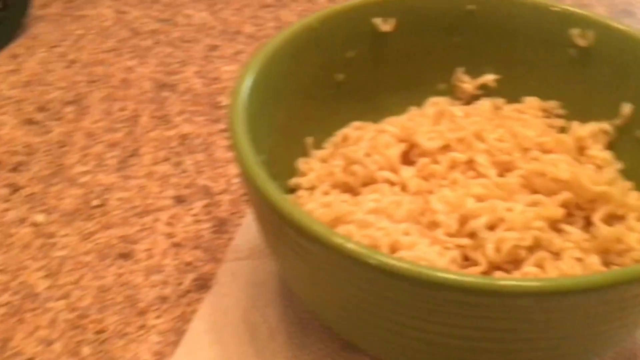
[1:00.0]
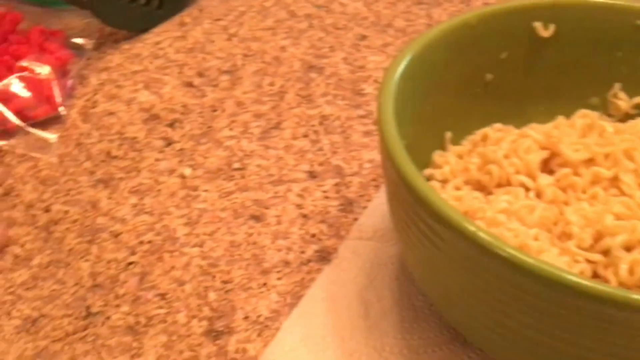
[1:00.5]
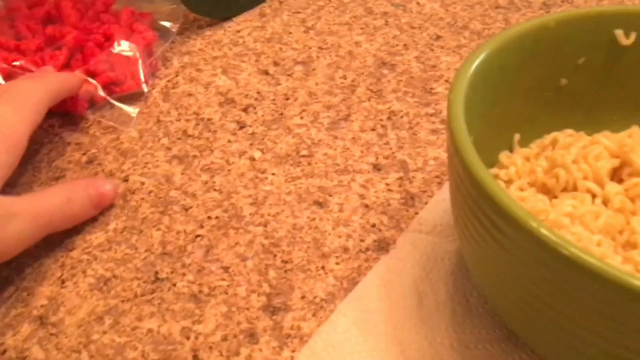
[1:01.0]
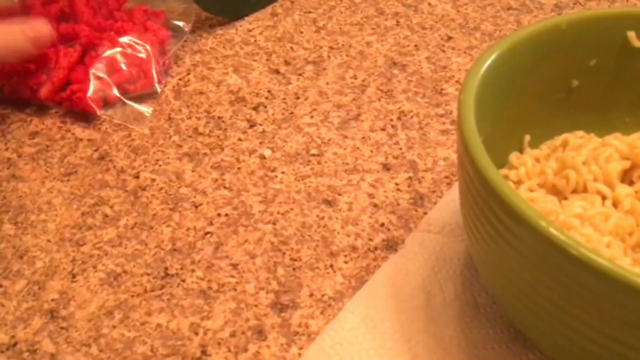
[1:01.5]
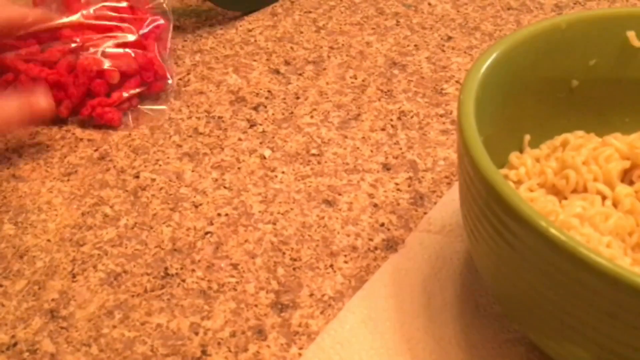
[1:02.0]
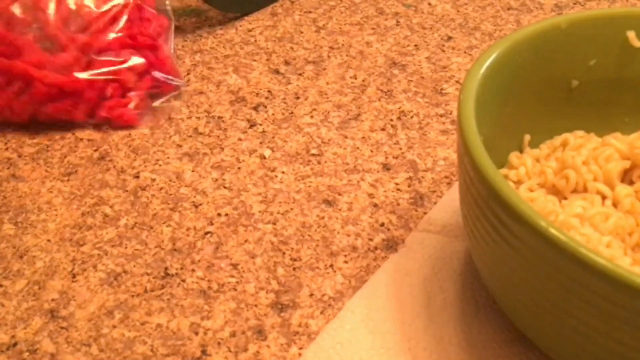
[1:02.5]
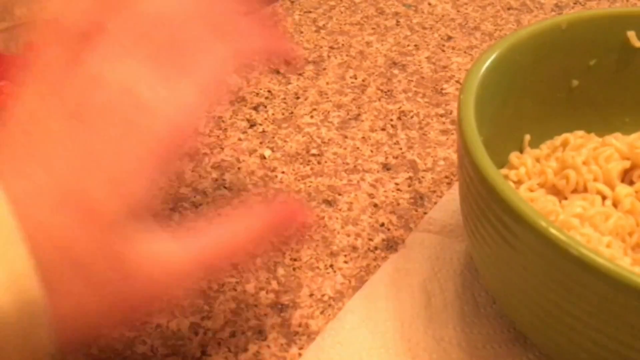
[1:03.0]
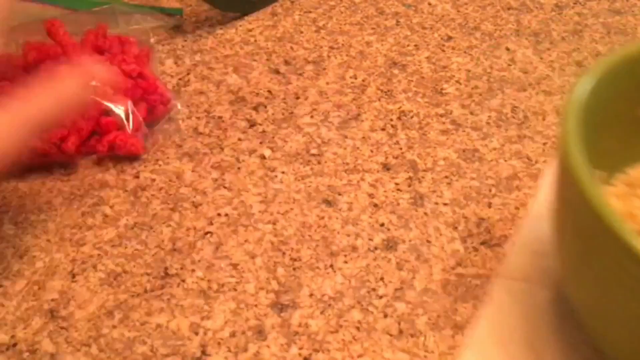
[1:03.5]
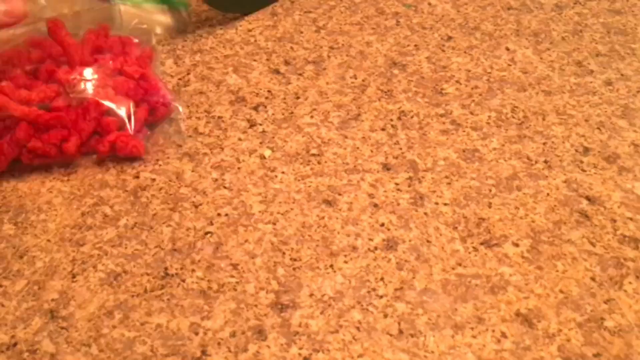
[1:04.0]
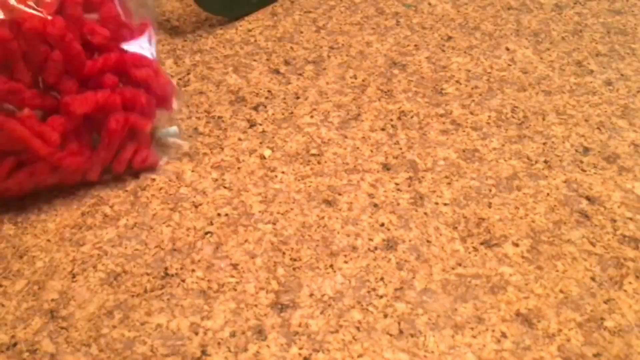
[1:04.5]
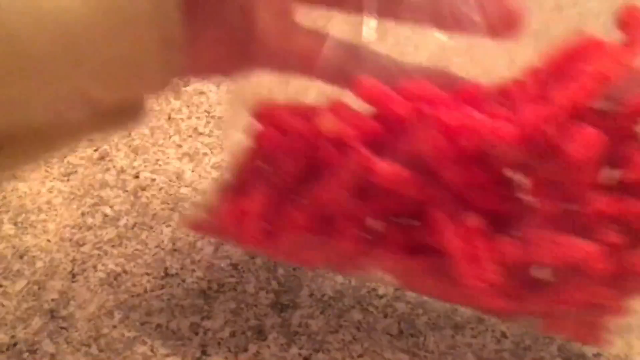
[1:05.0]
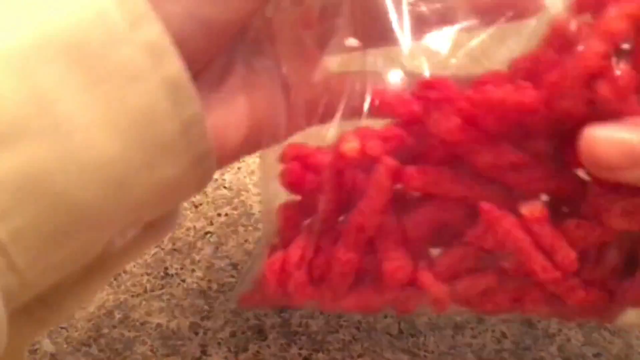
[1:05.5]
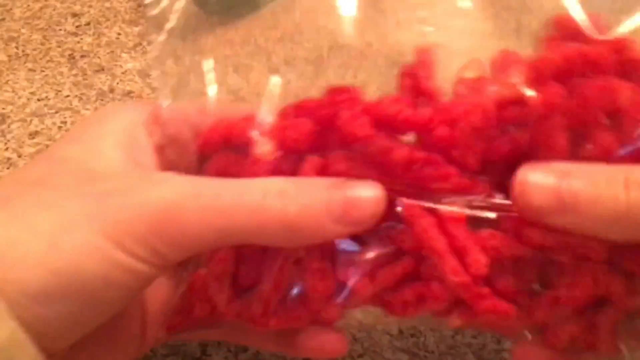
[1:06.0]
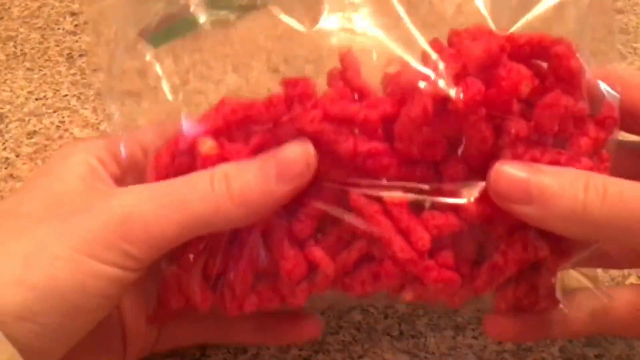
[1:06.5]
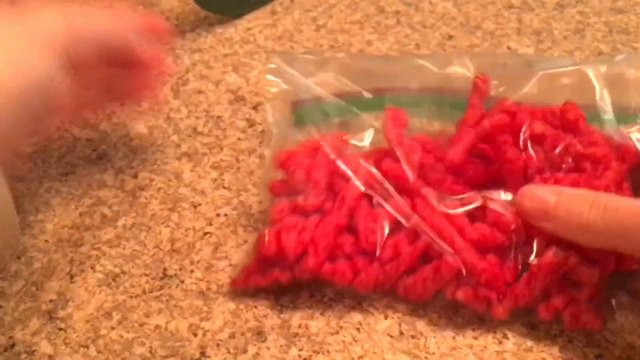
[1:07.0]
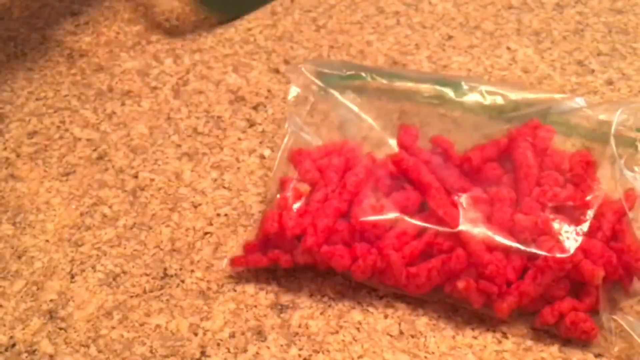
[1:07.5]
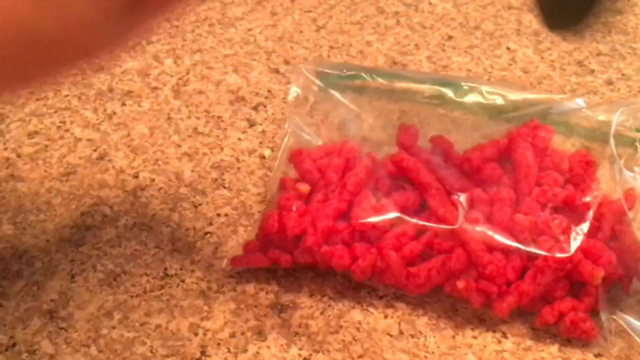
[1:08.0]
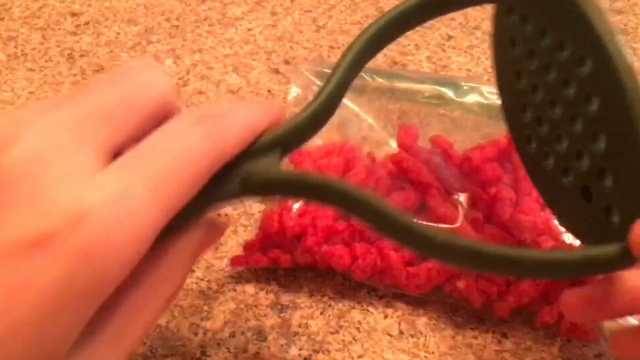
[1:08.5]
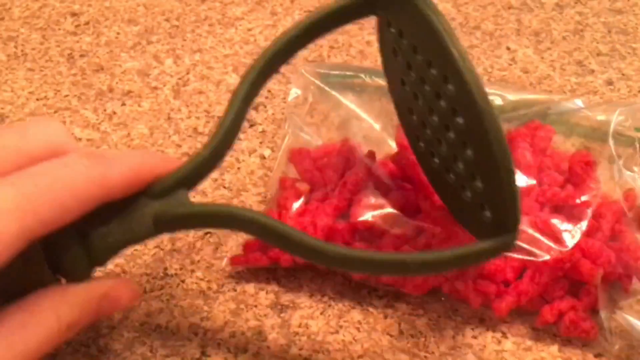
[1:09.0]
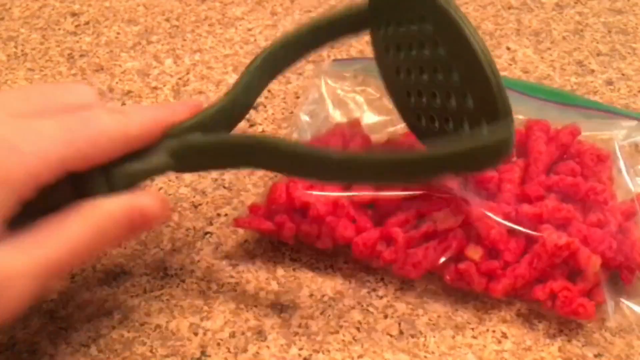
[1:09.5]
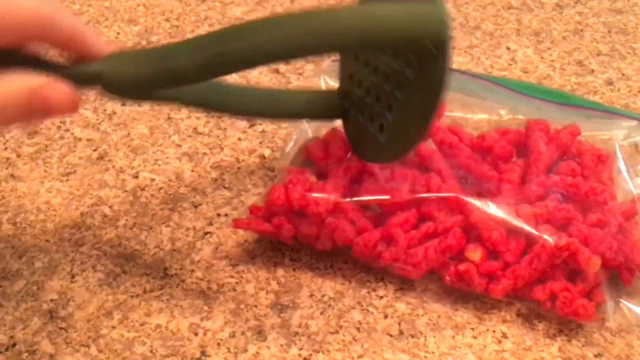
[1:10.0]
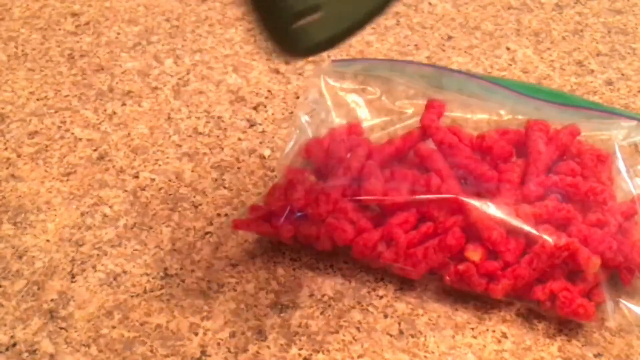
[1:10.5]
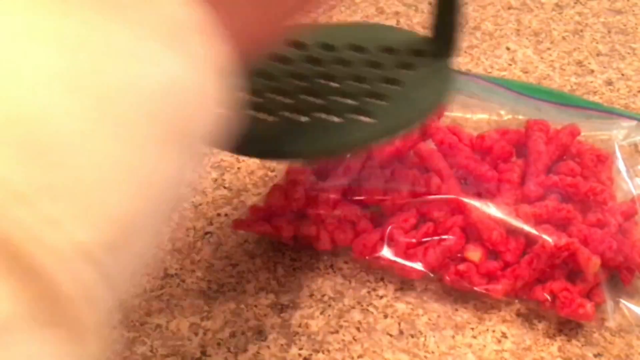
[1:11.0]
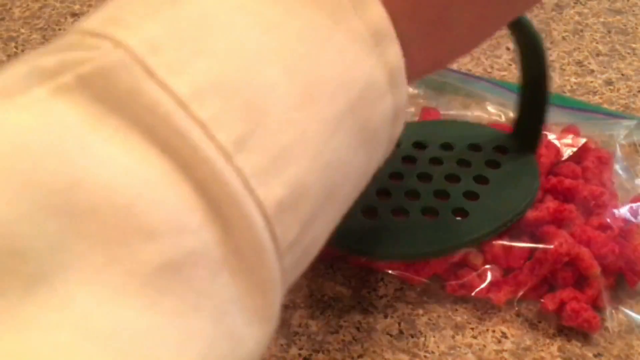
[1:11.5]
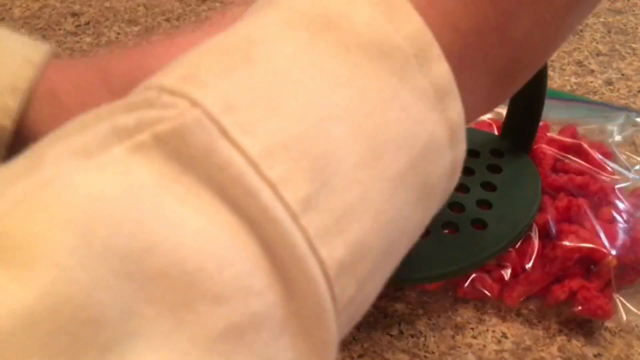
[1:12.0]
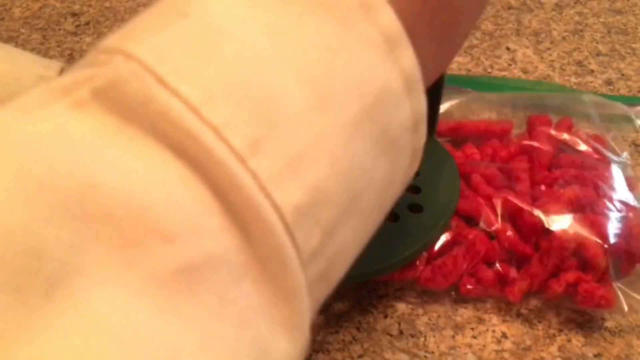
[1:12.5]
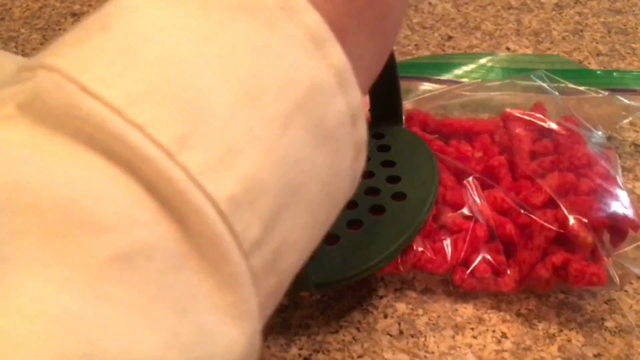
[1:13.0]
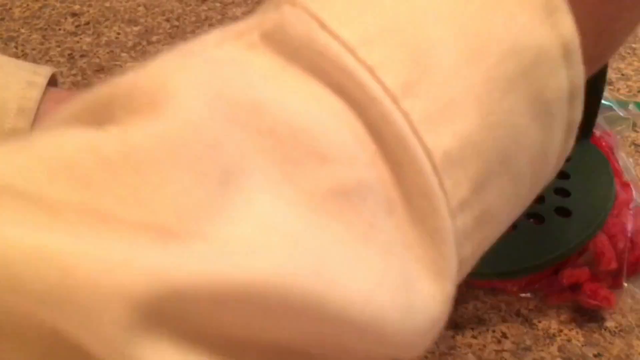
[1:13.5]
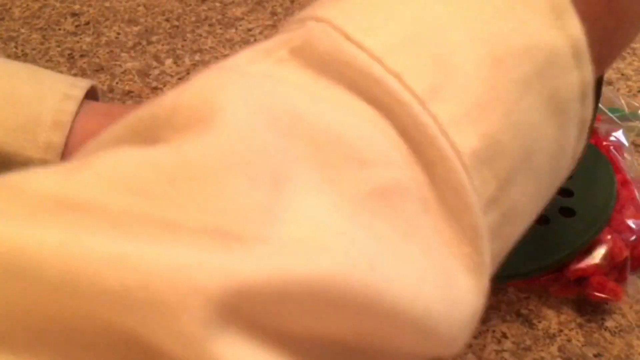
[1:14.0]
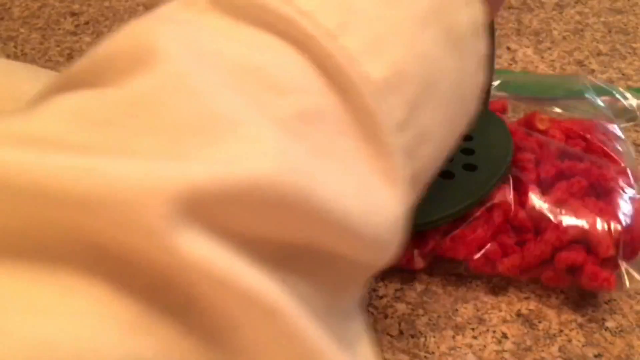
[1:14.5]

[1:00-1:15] The green bowl is at the right side of the picture, with the paper towel underneath it and the noodles wet. It is pushed to the right, out of the camera's view. The person reaches to their left and picks up a sandwich bag full of what seems to be about one cup of flaming red hot Cheetos, bringing it into the center of the shot. They take a black plastic potato ricer and first invert it on its side on top of the clear plastic sandwich bag, which has a green stripe at the top where it locks. Starting on the right-hand side, they crush the Cheetos with the potato masher and move toward the left.